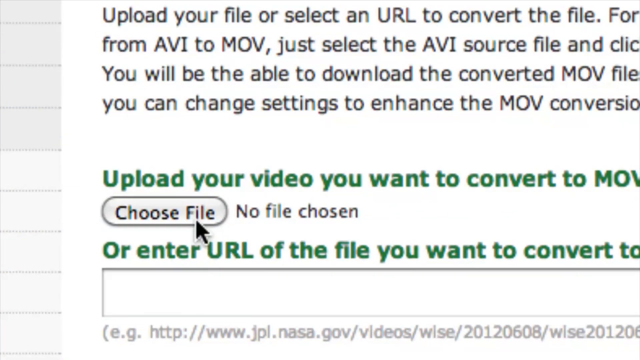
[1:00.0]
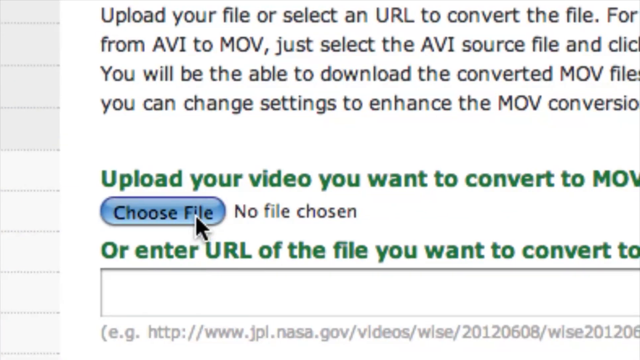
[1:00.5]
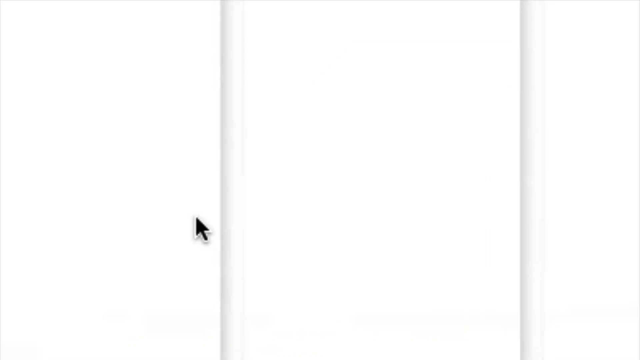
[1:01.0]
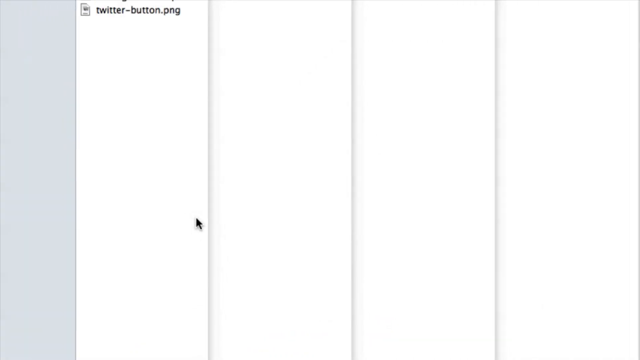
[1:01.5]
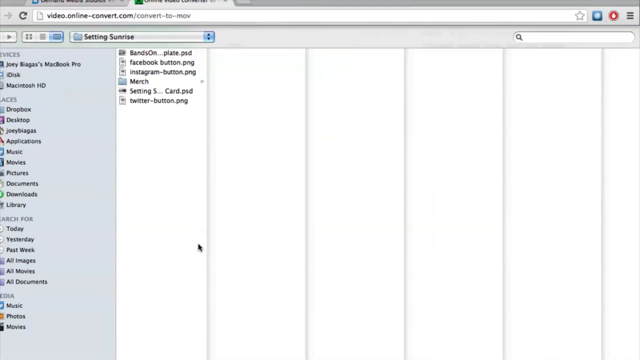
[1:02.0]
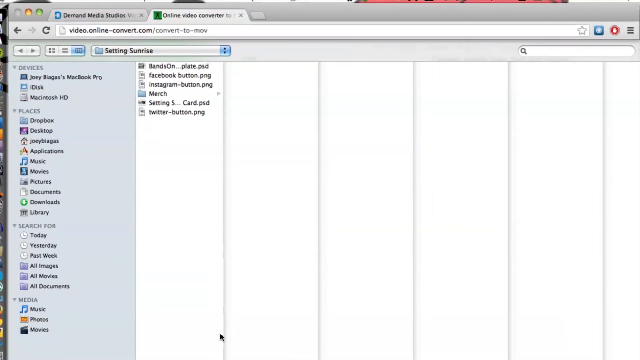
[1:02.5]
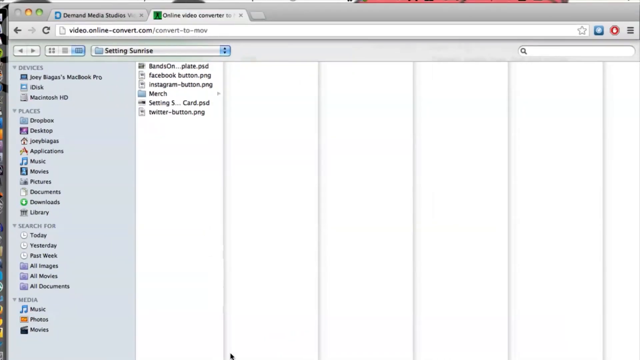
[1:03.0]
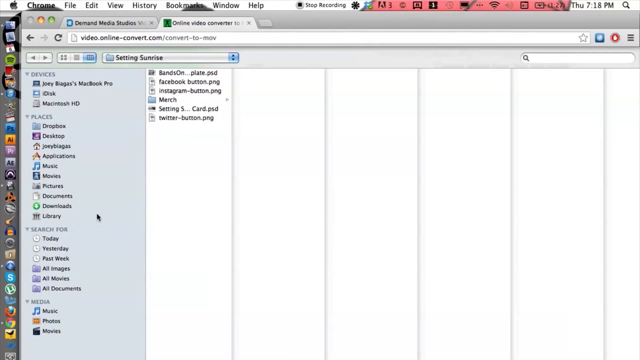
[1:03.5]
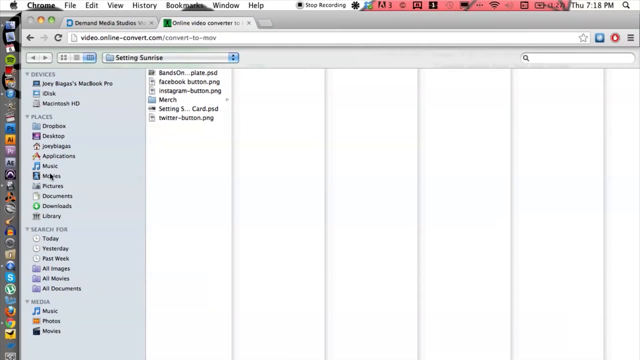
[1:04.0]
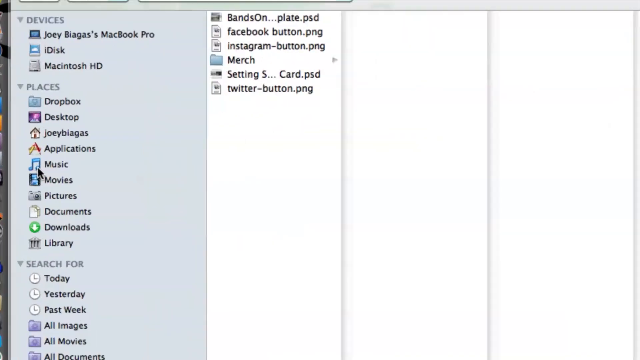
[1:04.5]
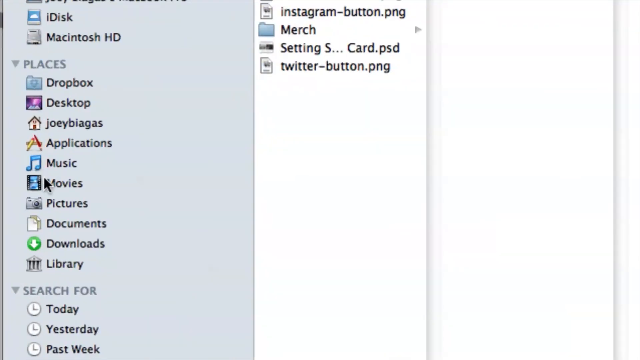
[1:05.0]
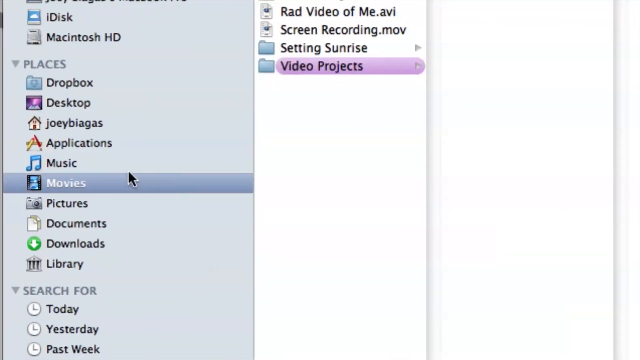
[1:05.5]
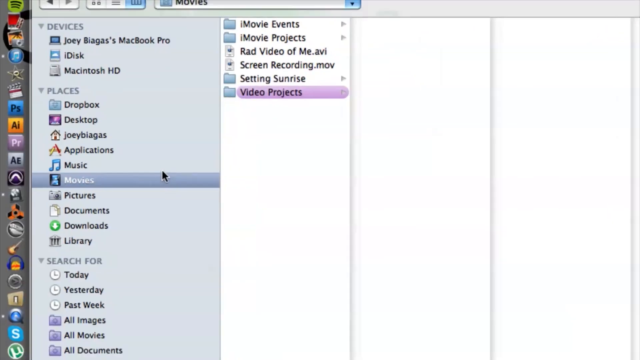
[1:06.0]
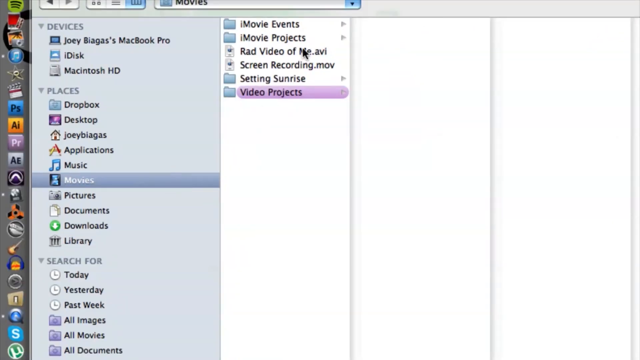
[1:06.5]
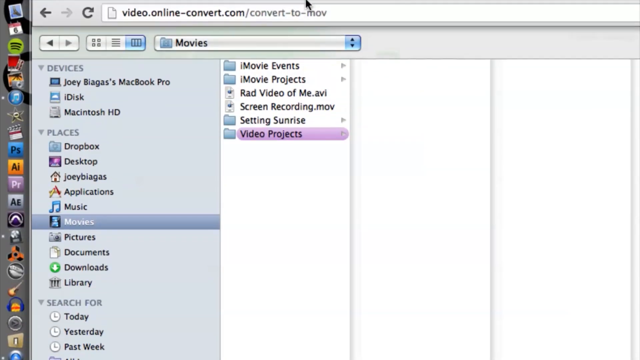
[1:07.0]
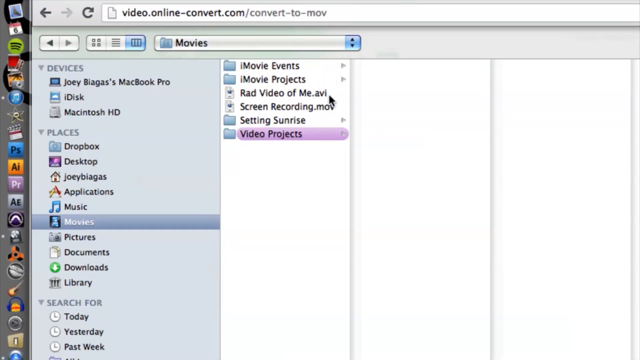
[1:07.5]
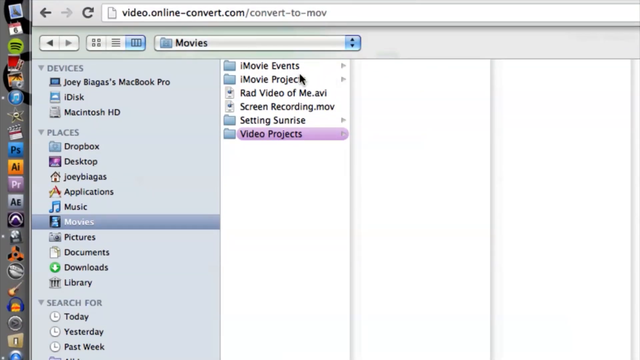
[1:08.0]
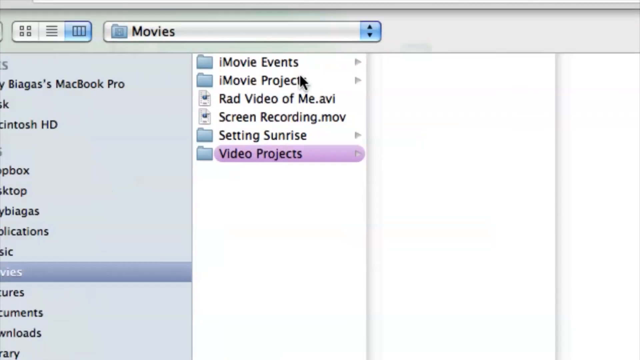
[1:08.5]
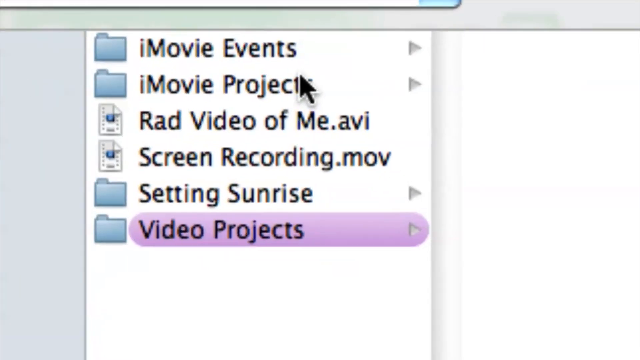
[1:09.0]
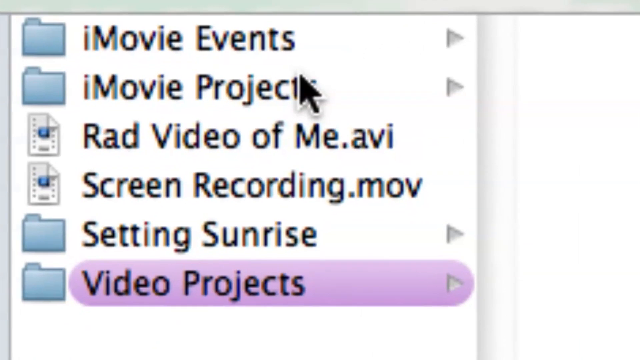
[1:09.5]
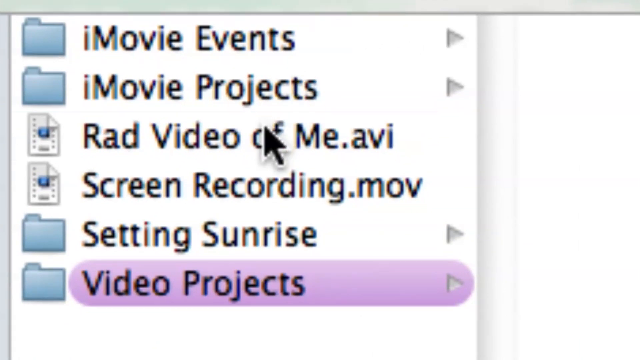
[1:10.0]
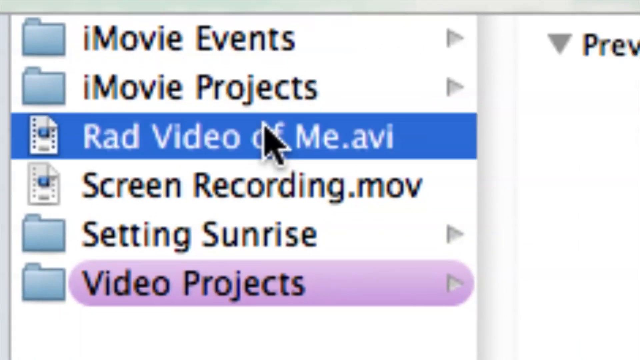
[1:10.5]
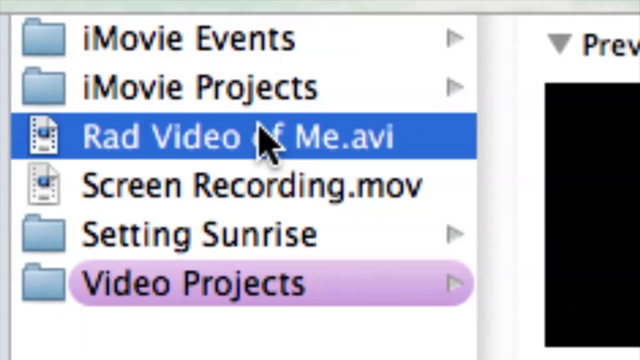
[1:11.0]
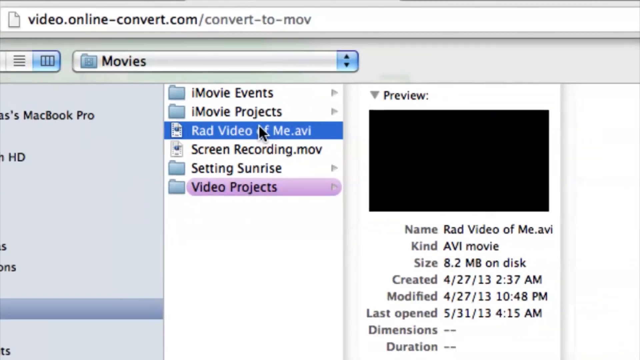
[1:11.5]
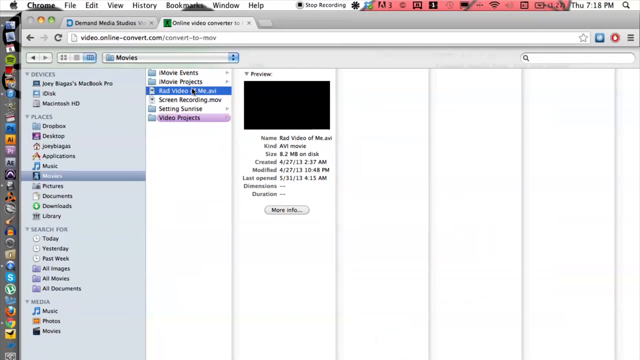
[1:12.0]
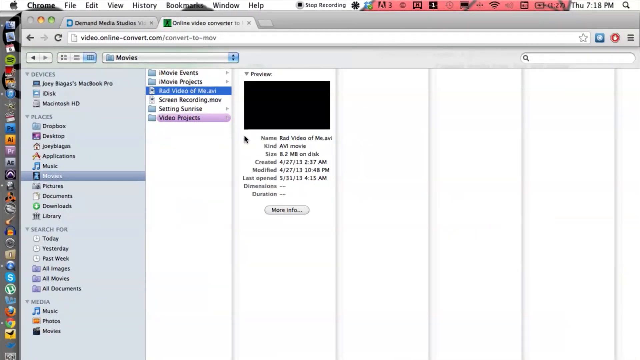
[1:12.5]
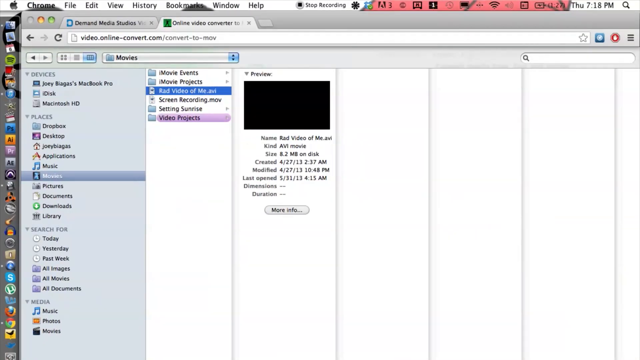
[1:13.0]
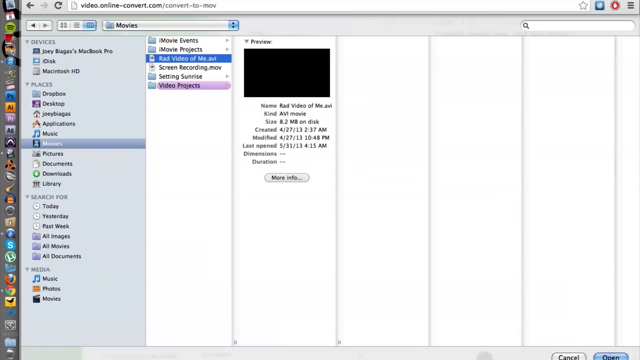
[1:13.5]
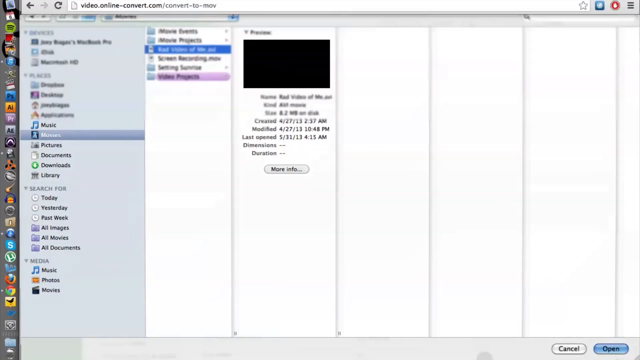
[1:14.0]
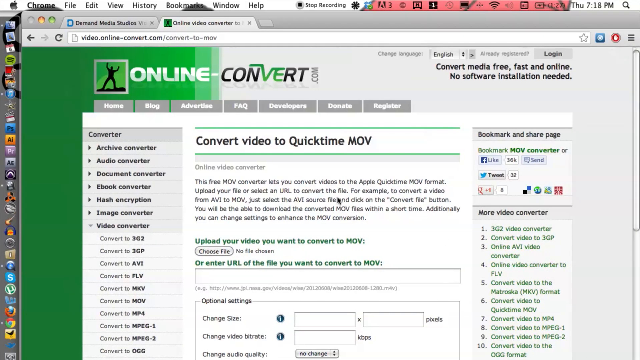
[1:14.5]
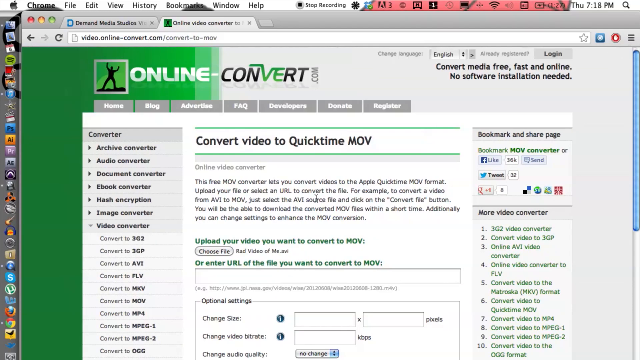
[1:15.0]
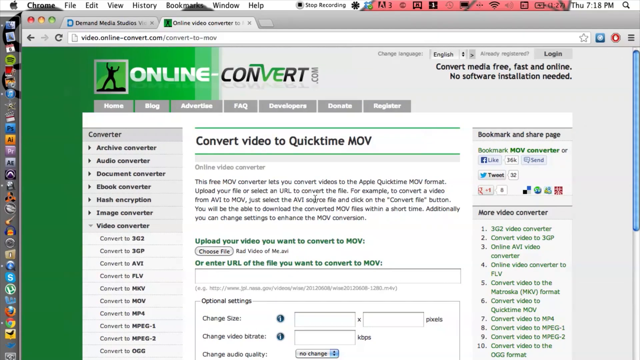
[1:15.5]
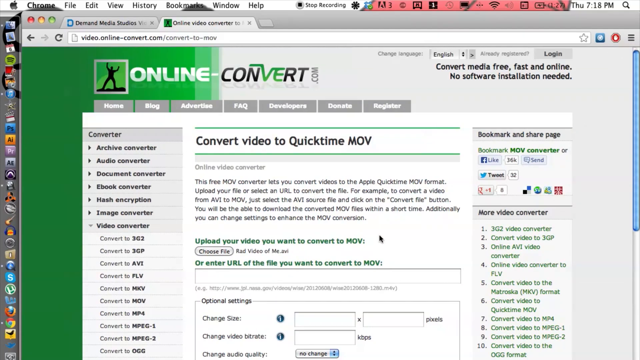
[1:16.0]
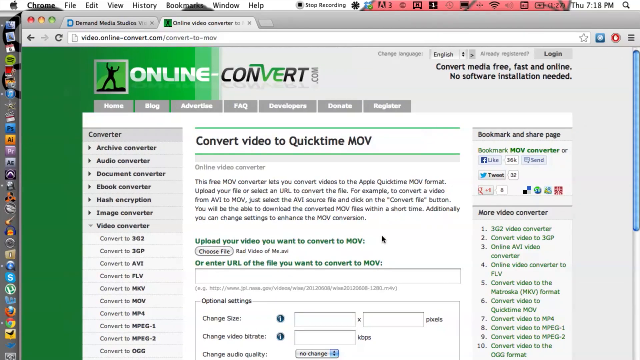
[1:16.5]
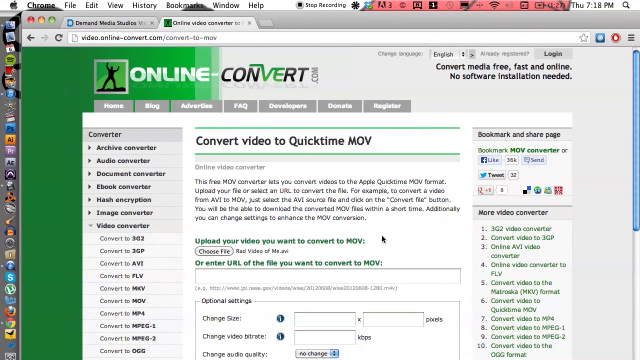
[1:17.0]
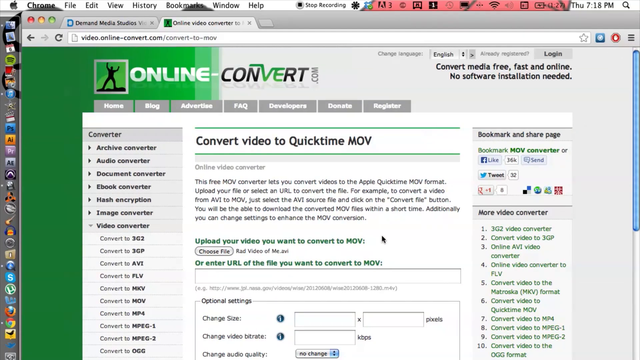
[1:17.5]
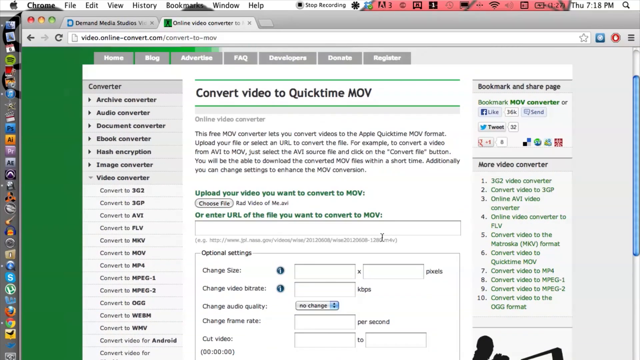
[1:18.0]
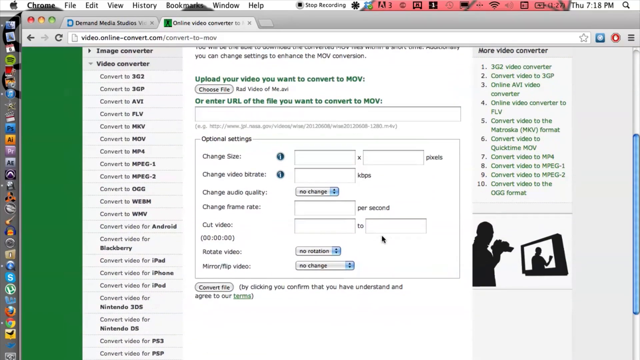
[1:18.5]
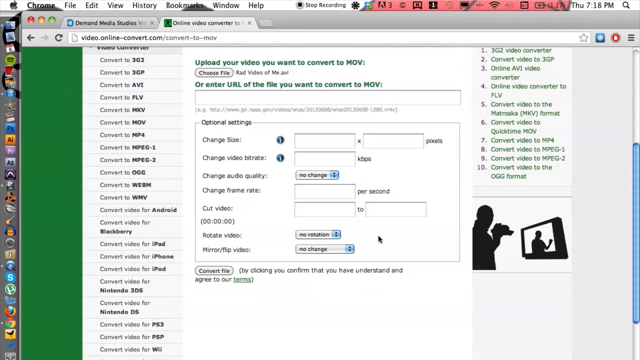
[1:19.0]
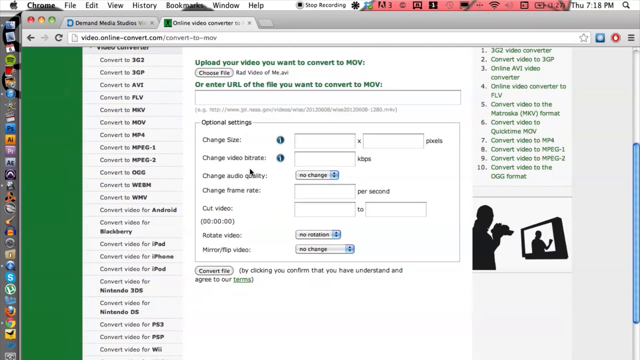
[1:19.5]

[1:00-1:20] A drop-down menu with many columns appears. He scrolls over to the movie section and clicks on different items, such as RAD video. He clicks on and exits various websites, then goes to a section reading "choose your file" and "upload file" and chooses a file to upload, navigating the page with a focus on the movie section.